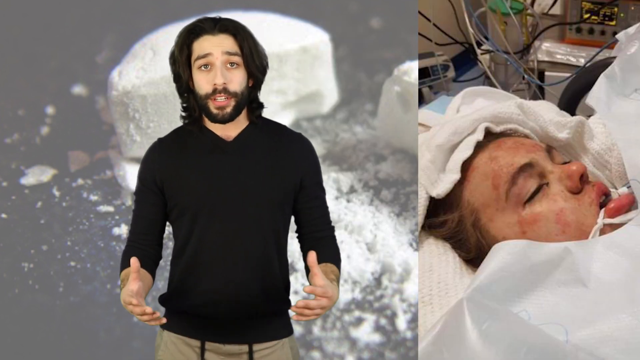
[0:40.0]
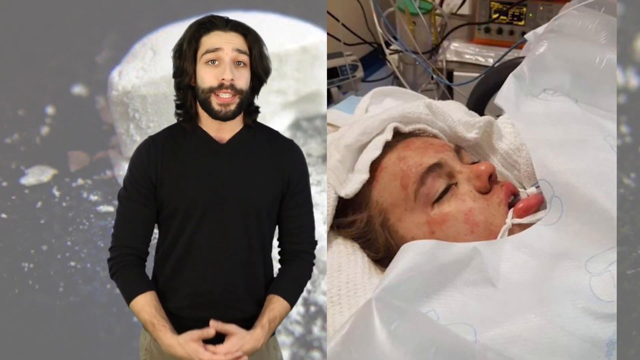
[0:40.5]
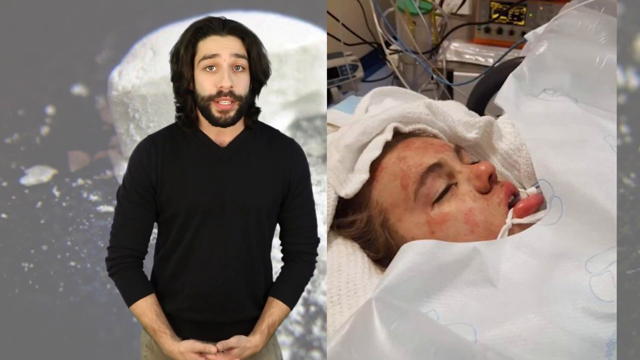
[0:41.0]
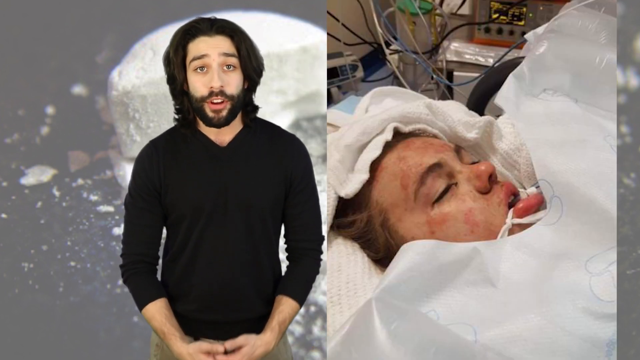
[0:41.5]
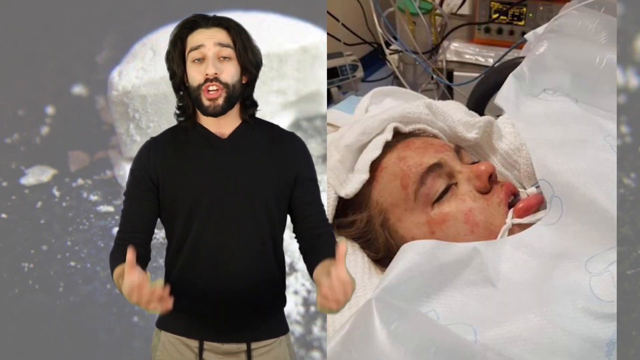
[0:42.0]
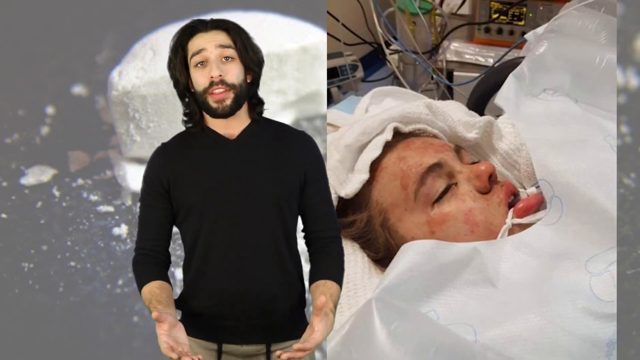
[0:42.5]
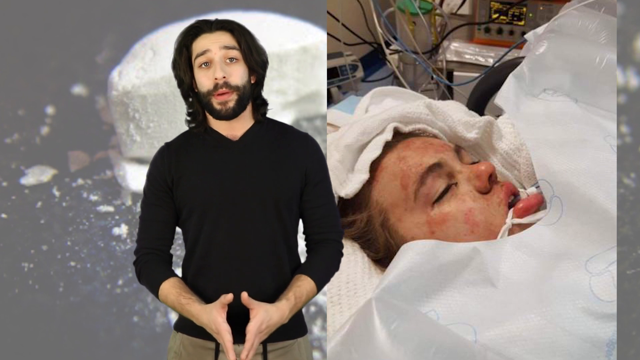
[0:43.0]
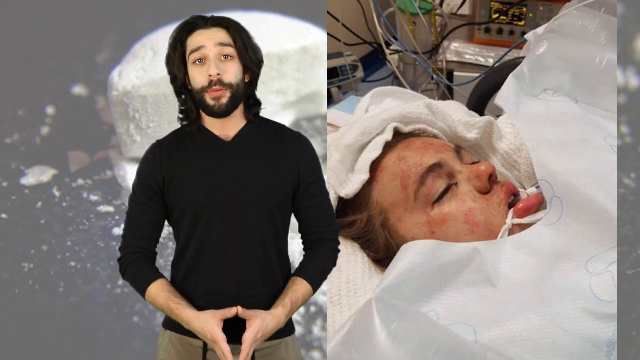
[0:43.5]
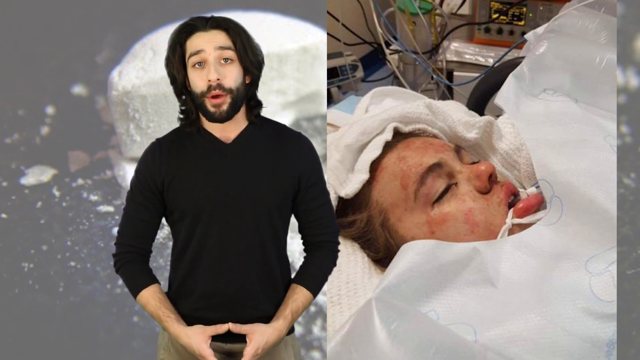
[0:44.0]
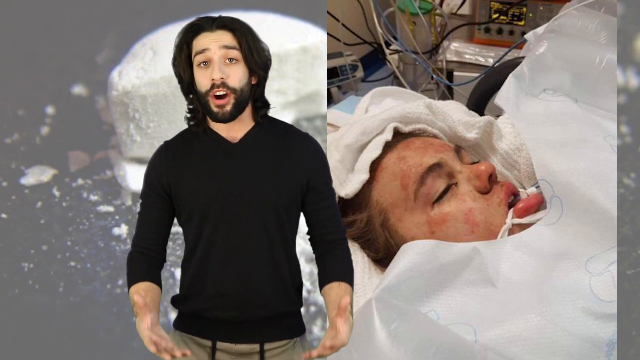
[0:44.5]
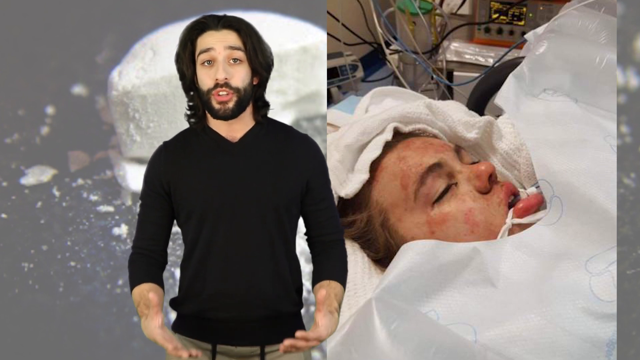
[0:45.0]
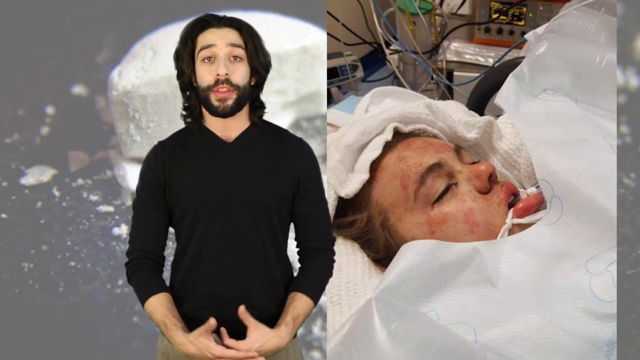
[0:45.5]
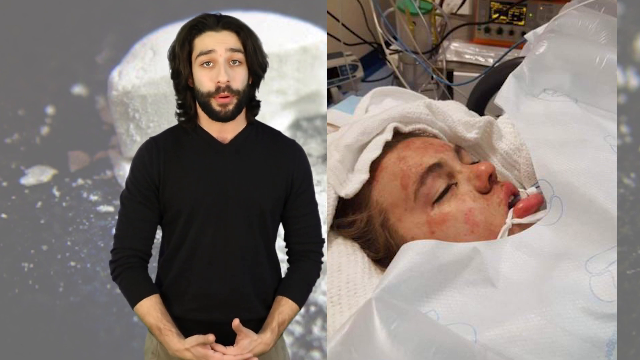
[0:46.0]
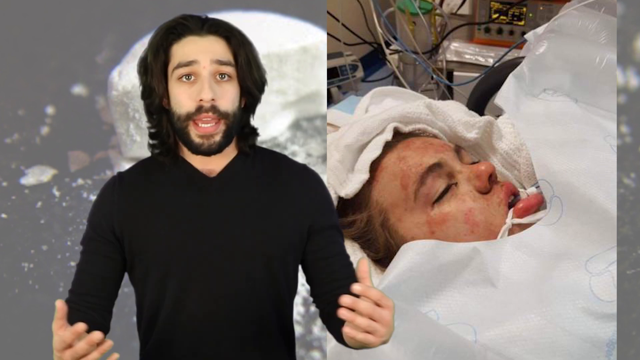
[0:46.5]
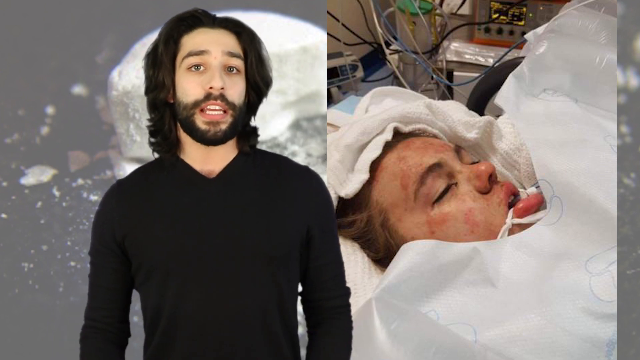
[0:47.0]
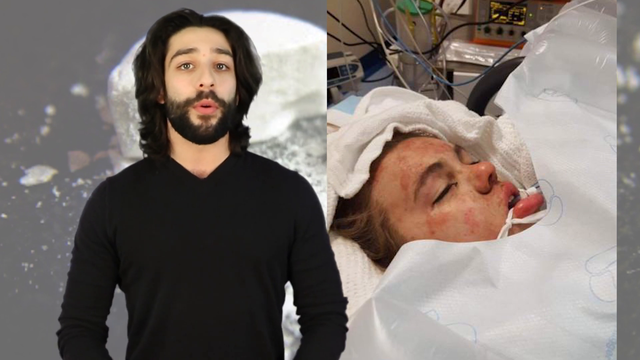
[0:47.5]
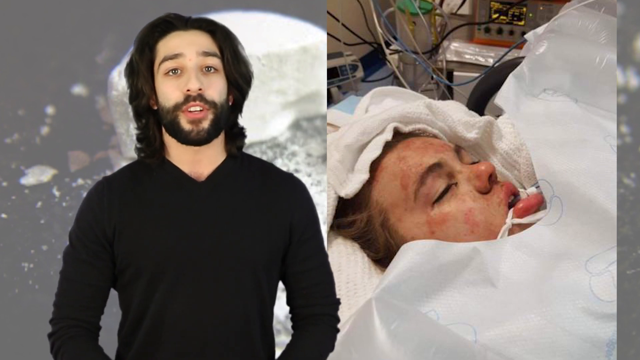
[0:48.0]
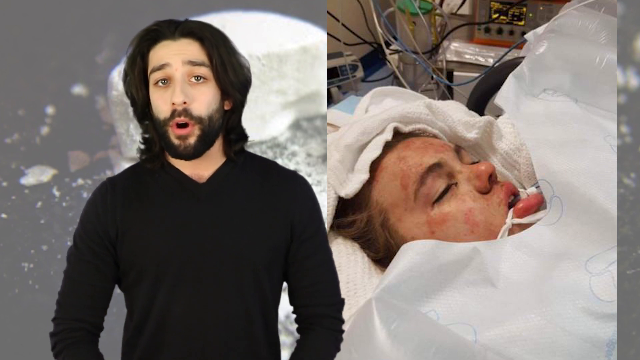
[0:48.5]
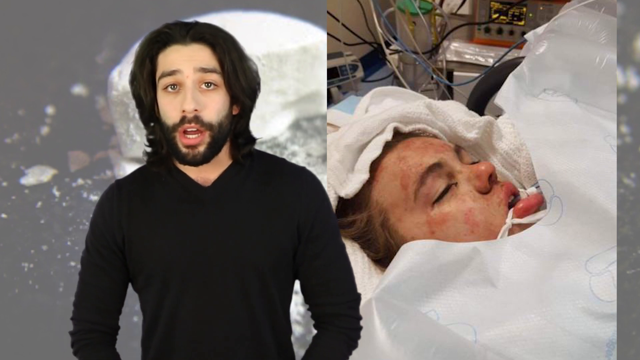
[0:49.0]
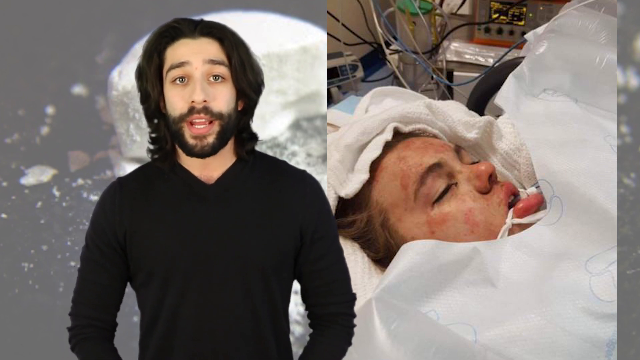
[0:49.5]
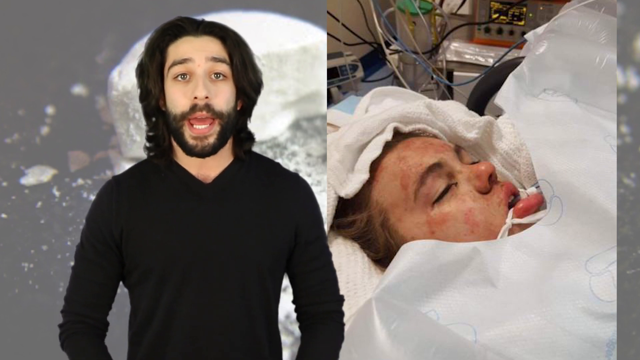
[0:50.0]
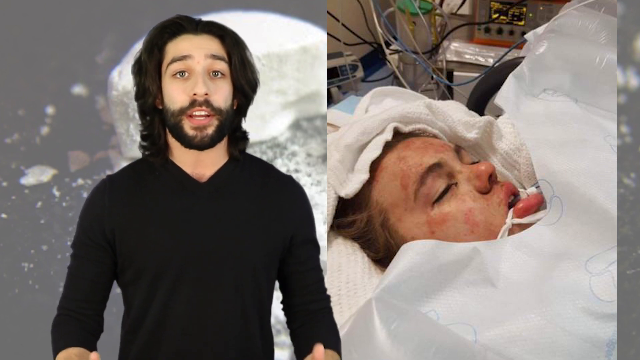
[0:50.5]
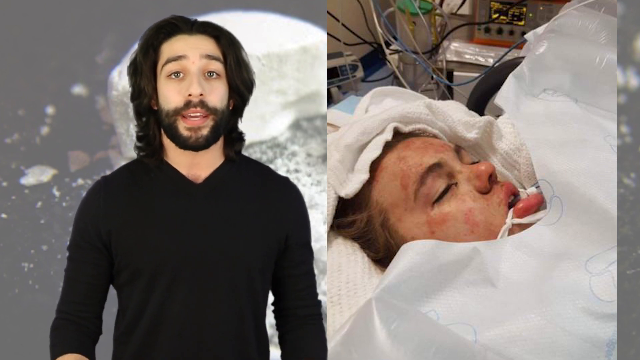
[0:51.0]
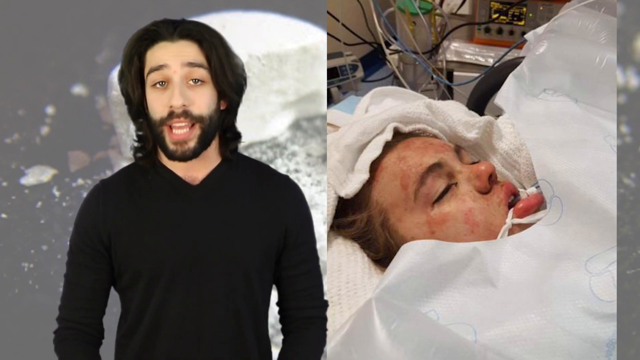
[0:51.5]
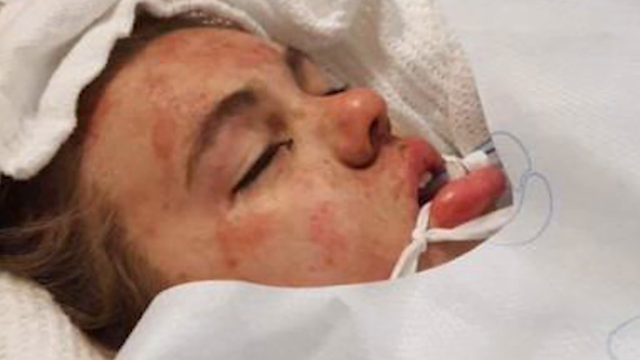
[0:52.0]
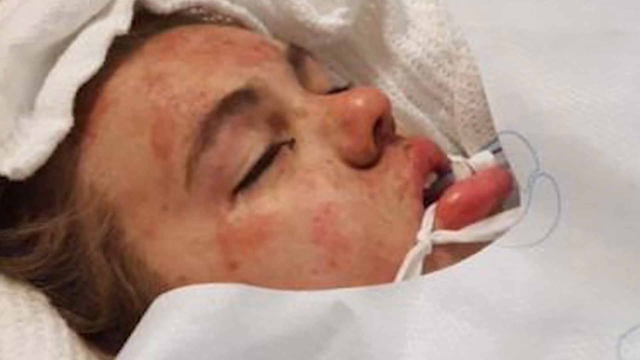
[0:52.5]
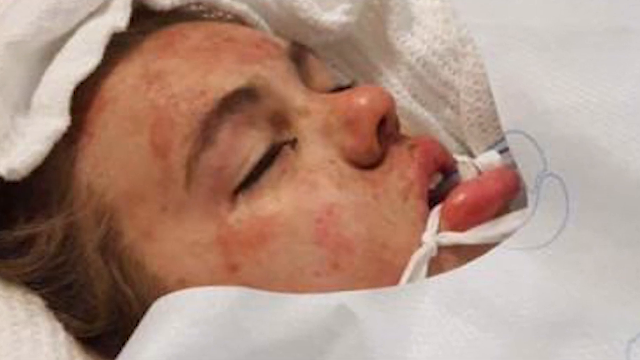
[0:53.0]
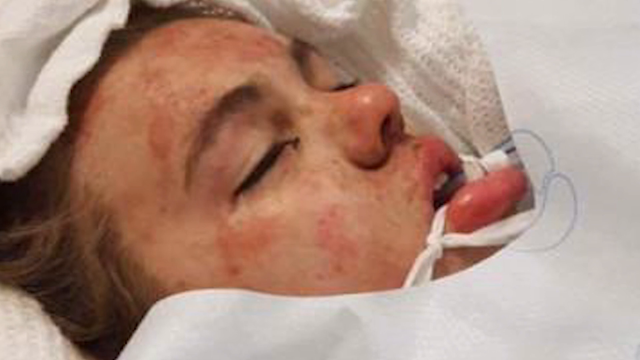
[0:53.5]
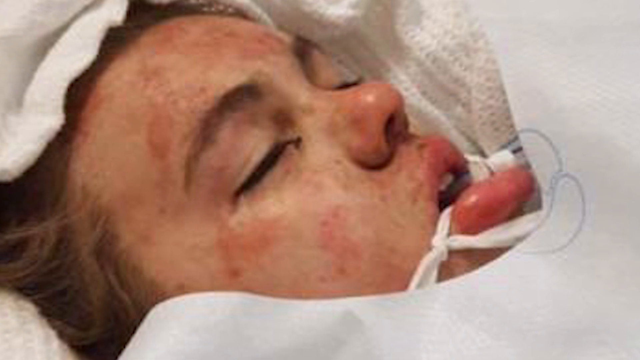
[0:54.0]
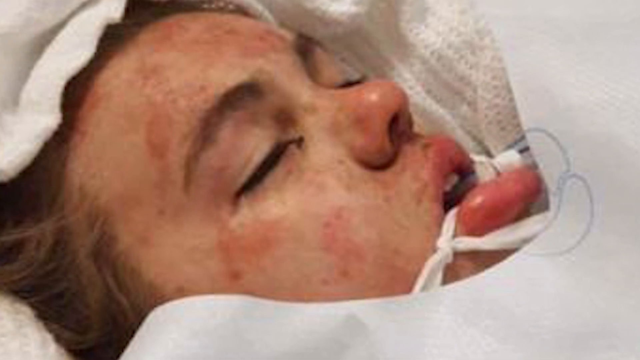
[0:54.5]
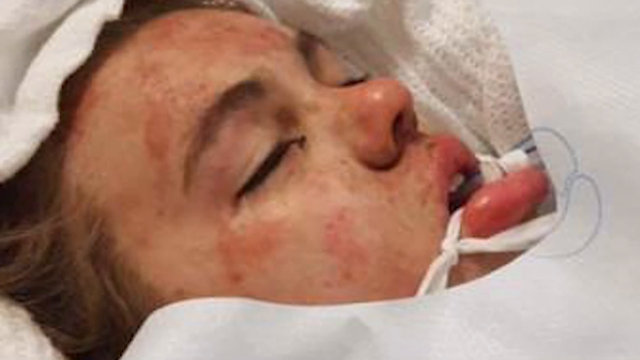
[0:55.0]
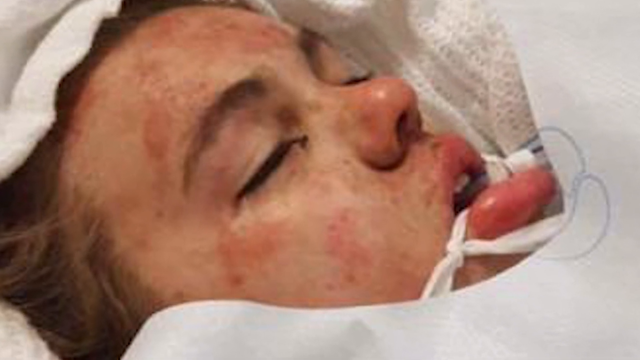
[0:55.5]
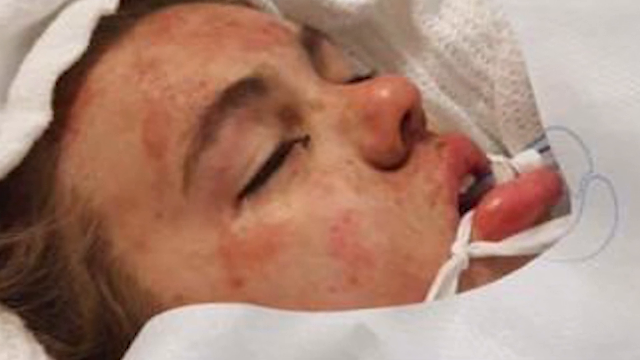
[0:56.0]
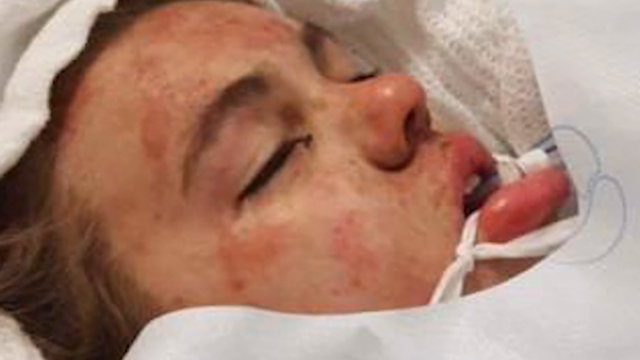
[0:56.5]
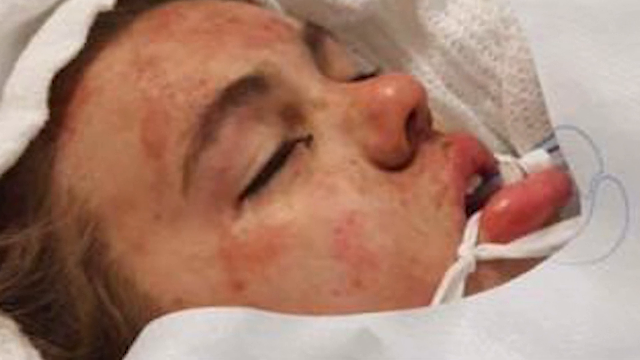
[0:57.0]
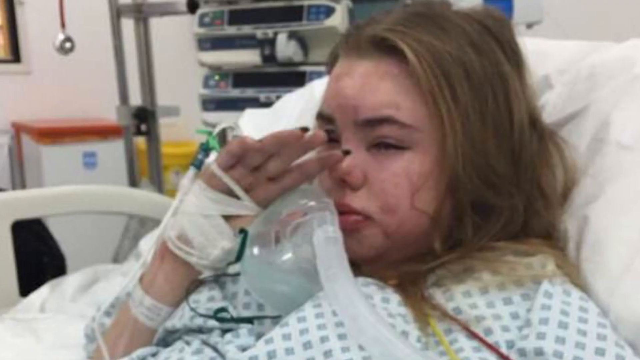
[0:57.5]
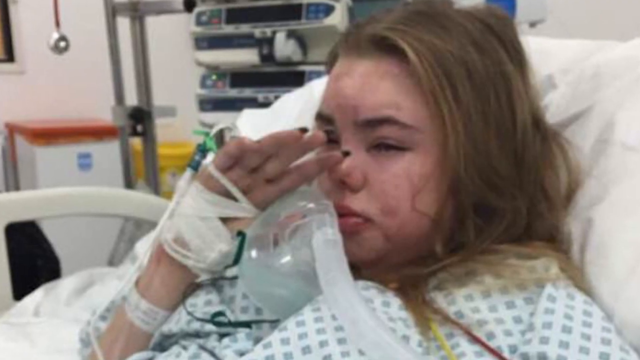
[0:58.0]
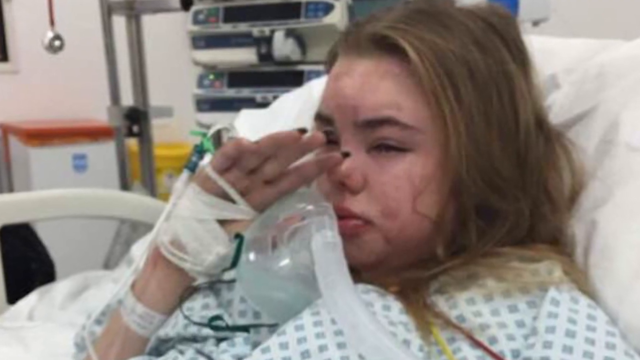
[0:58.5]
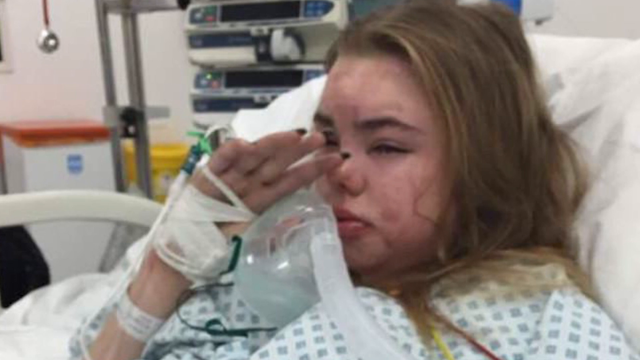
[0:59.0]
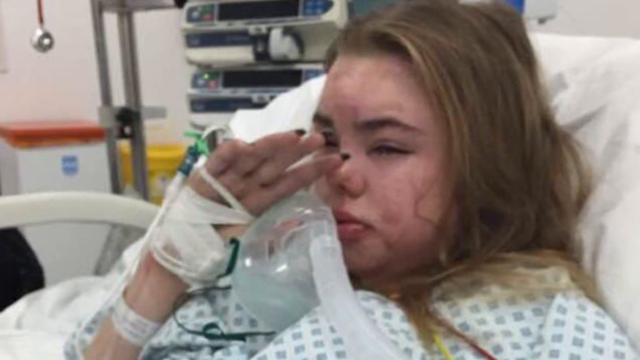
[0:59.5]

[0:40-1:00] The screen splits: Jared is still talking over the green screen of the pills, and right next to him is the image of the woman in the hospital, who seems to be unconscious. Next comes a photo of her sitting up in a hospital bed, still in a hospital gown. She looks like she is crying, holding her hands under her nose, with teary eyes. She looks less disheveled than in the first photo but appears shaken up or upset. Her face also looks very red and scarred. It is hard to tell whether she is the same woman as in the selfie.